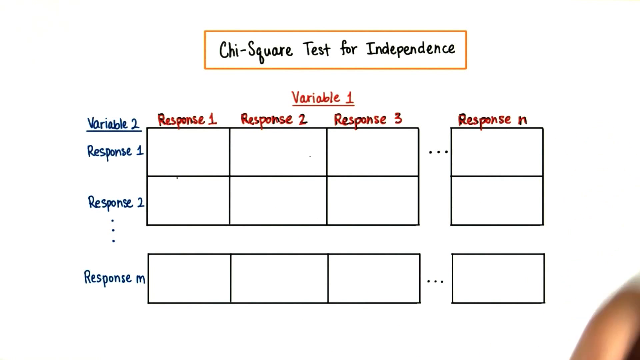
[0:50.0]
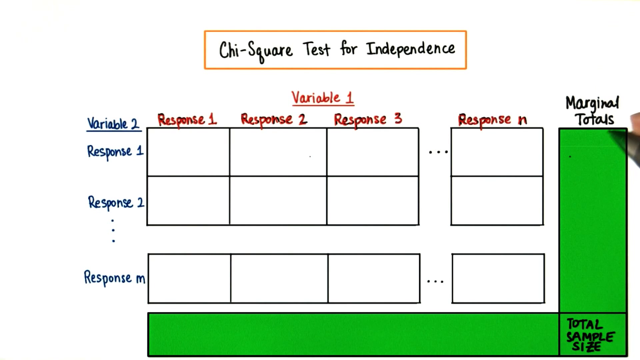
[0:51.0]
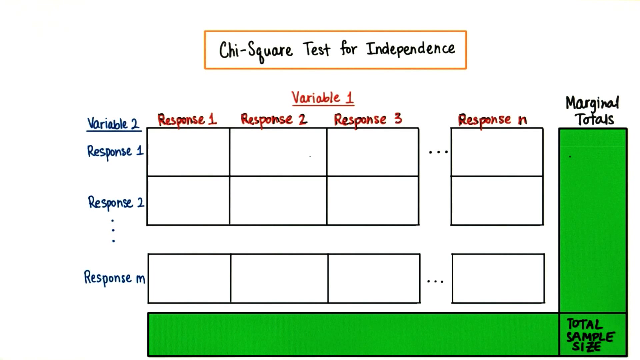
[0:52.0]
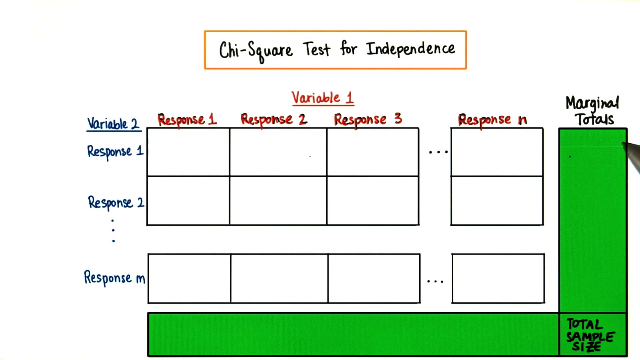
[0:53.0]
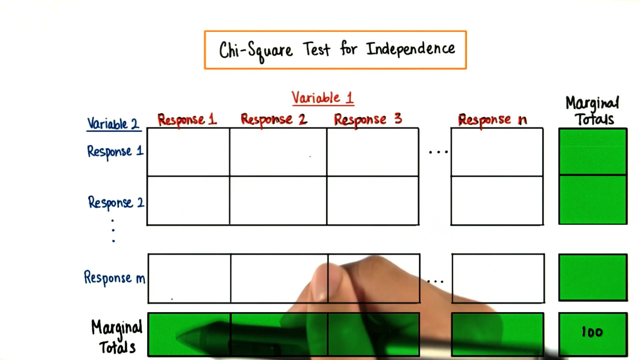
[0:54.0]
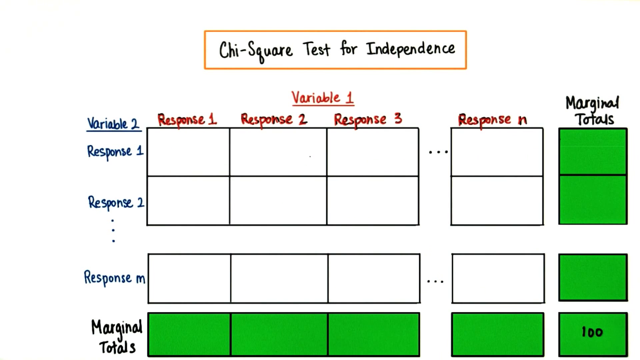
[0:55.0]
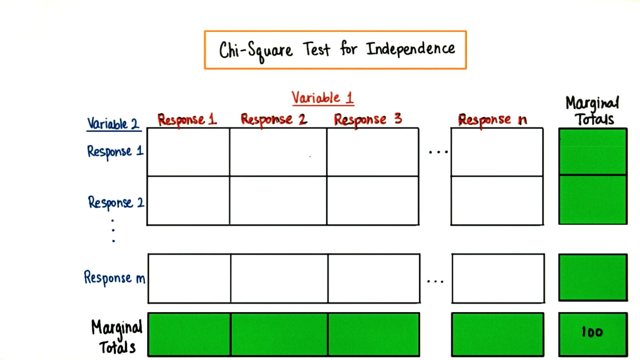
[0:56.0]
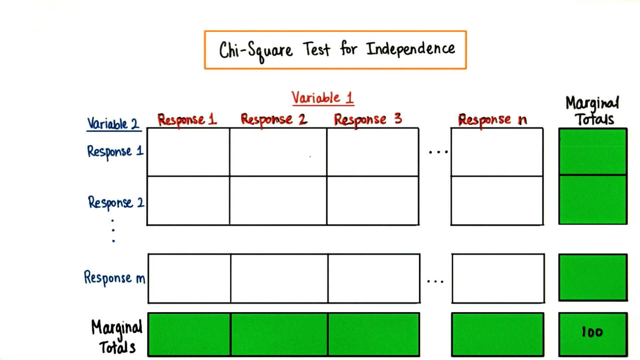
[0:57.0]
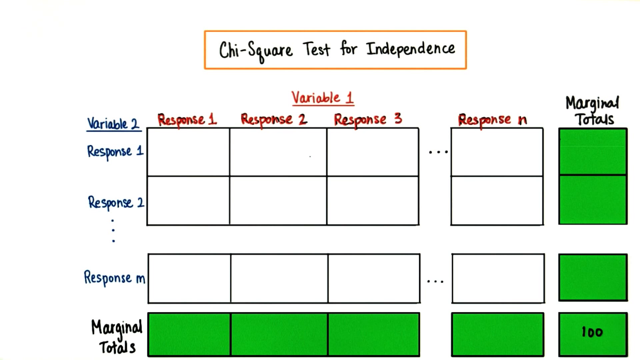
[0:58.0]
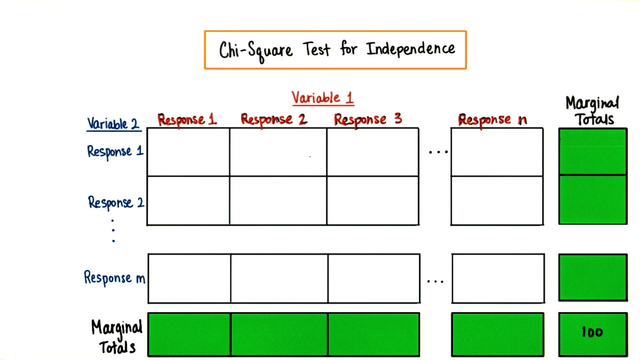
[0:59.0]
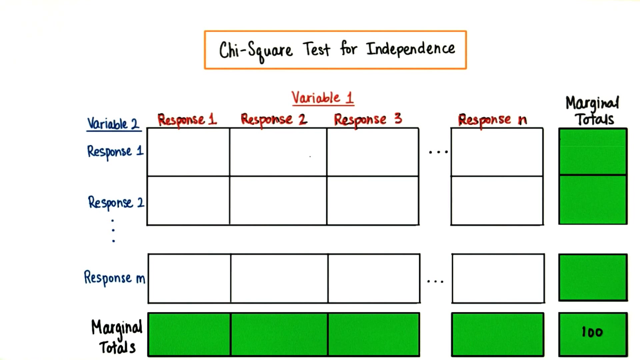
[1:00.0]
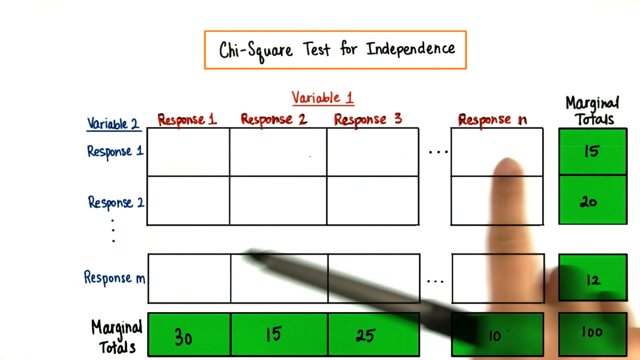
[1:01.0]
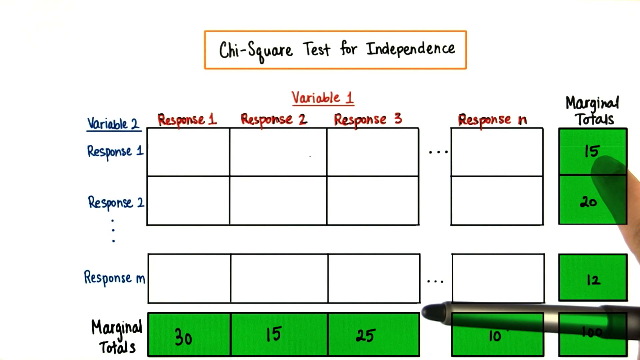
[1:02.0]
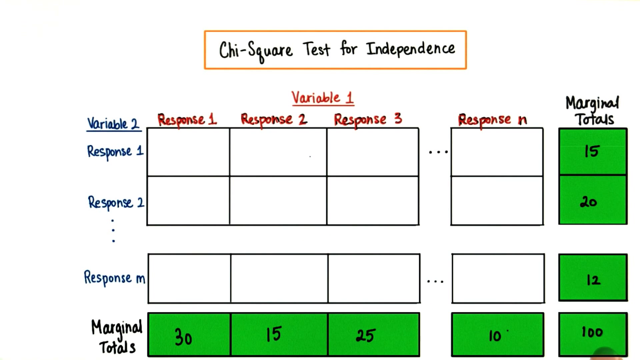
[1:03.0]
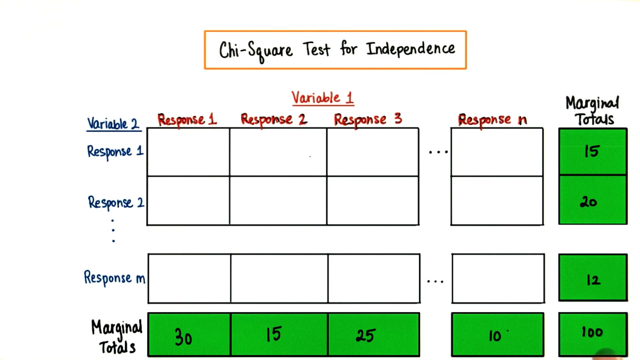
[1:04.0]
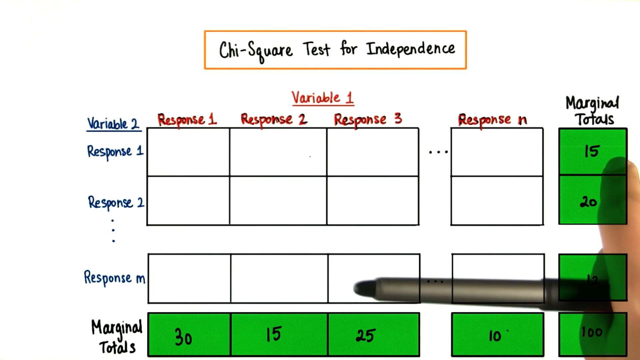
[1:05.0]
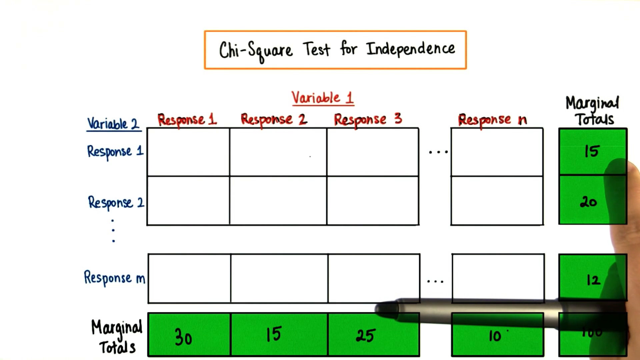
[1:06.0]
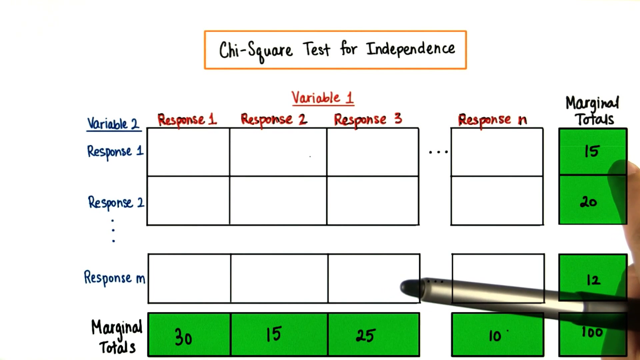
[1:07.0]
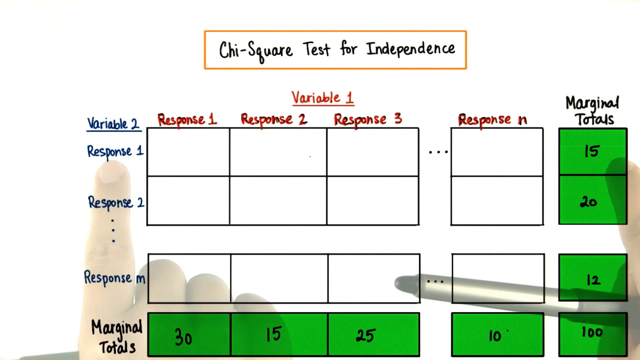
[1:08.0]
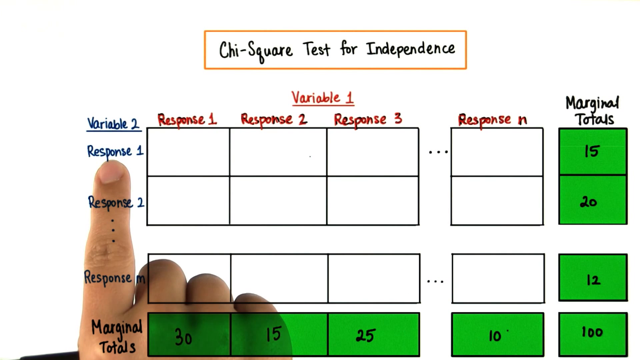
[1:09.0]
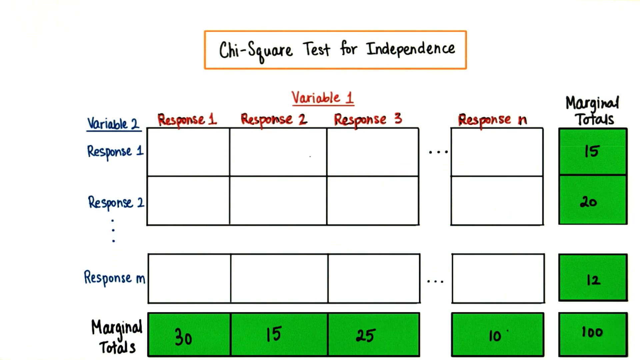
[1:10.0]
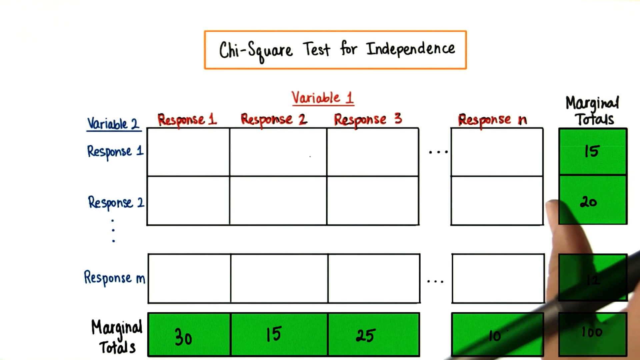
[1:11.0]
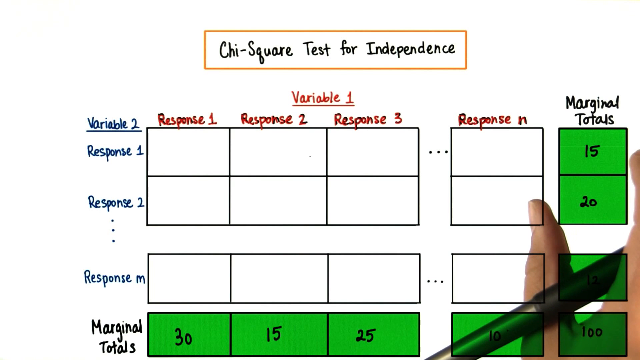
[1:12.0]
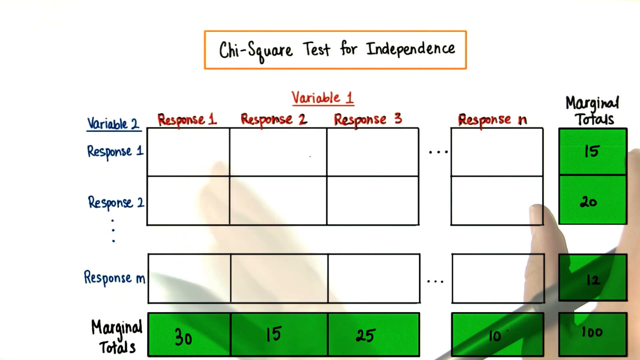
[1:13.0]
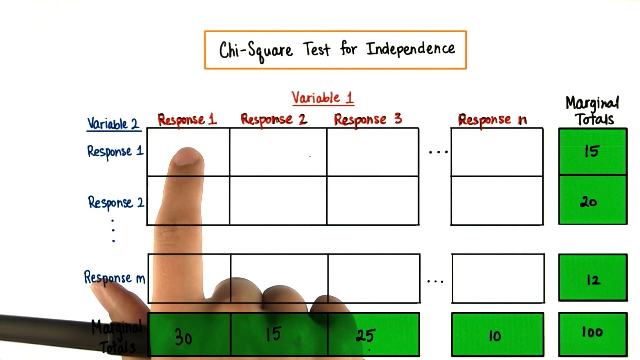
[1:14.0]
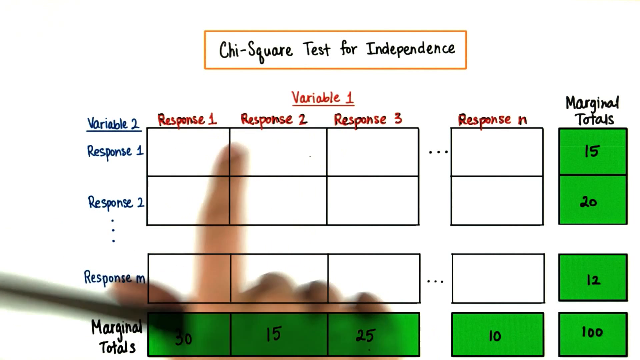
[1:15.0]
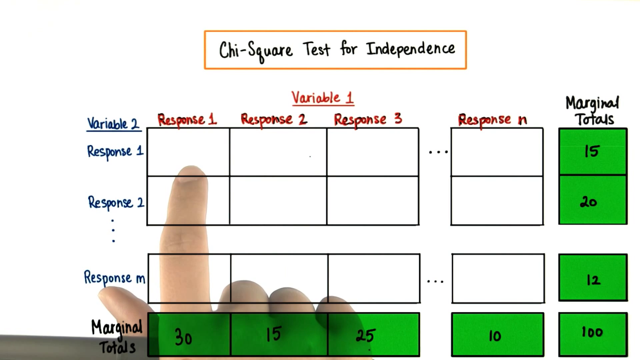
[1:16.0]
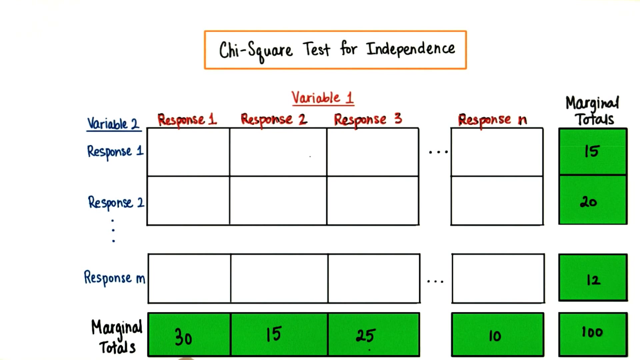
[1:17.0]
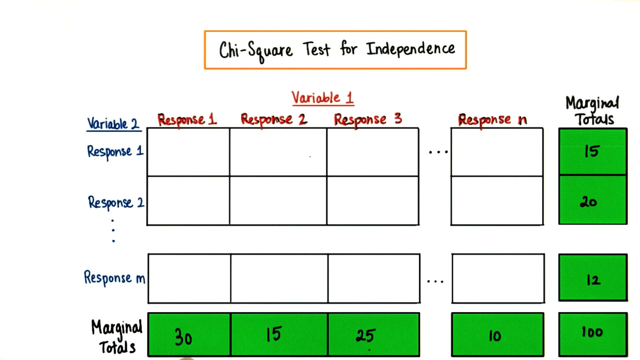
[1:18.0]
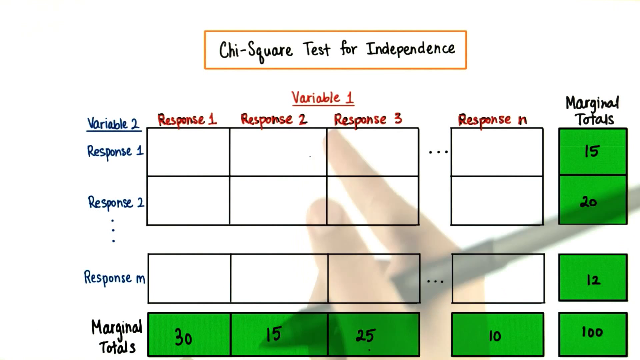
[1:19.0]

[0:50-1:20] More of the table is shown. On the right and at the very bottom it says "marginal totals". Nothing is written in it yet, and the person is still pointing out the various columns and rows. The video then skips ahead to a point where numbers are written in the far right column and the bottom row. In the marginal totals, Response 1 is 15, Response 2 is 20, Response M is 12, and the overall marginal total is 100. Along the columns, Response 1 is 30, Response 2 is 15, Response 3 is 25 and Response M is 10, so there are apparently two different sets of data.